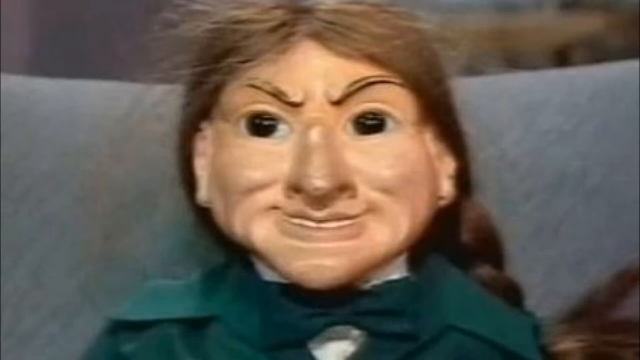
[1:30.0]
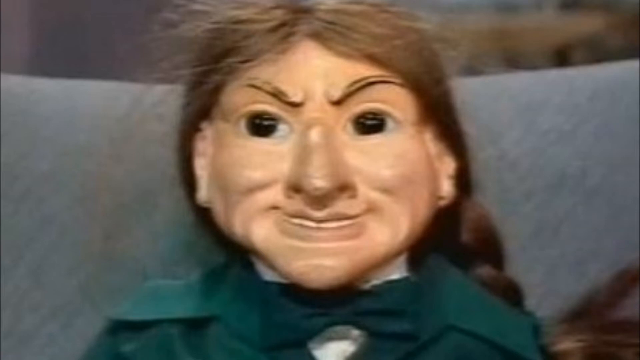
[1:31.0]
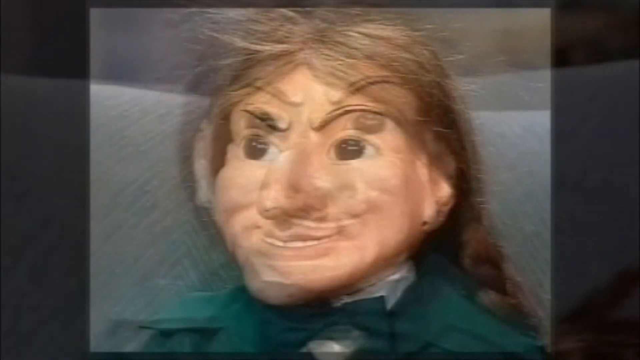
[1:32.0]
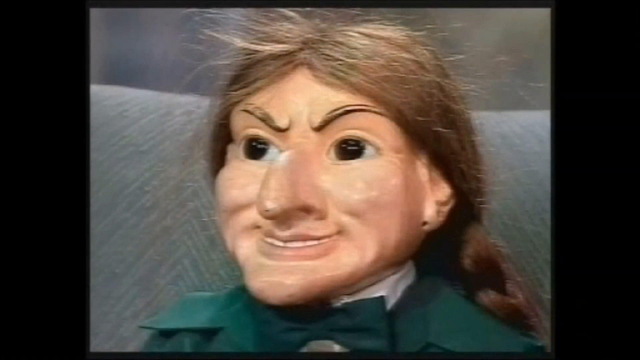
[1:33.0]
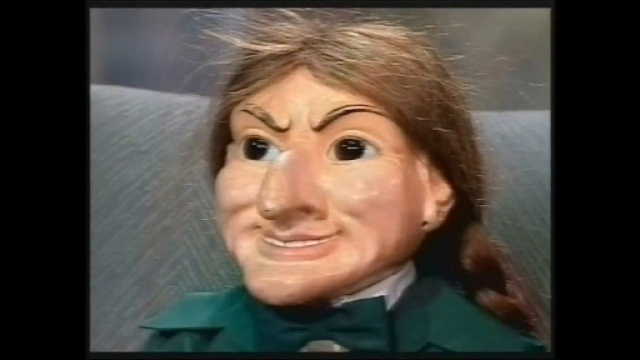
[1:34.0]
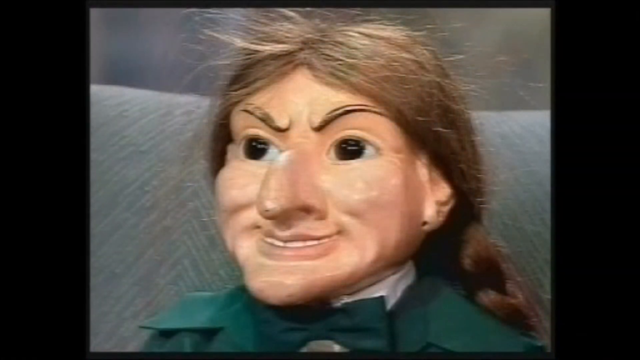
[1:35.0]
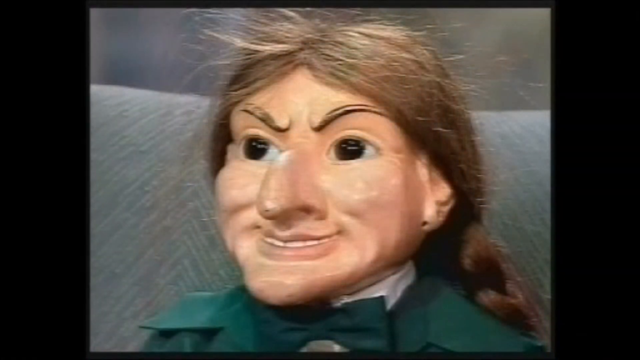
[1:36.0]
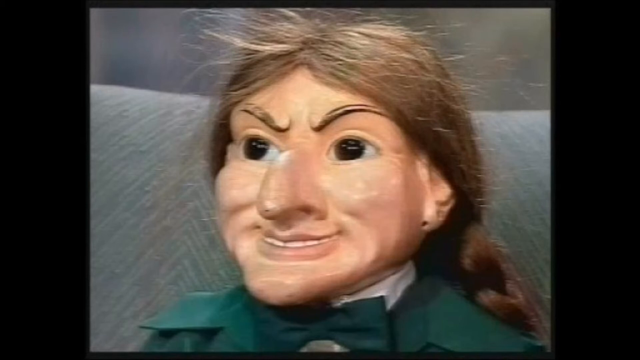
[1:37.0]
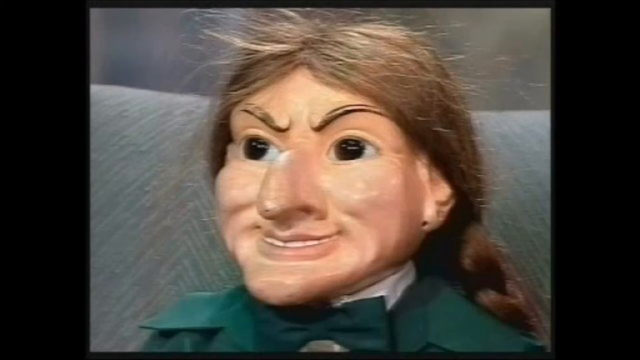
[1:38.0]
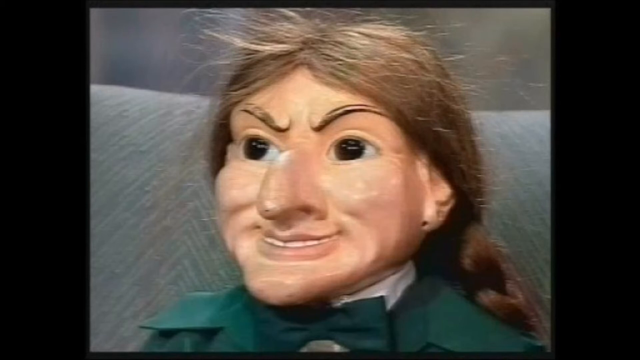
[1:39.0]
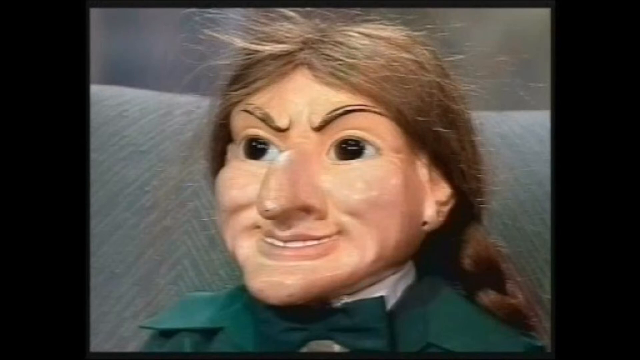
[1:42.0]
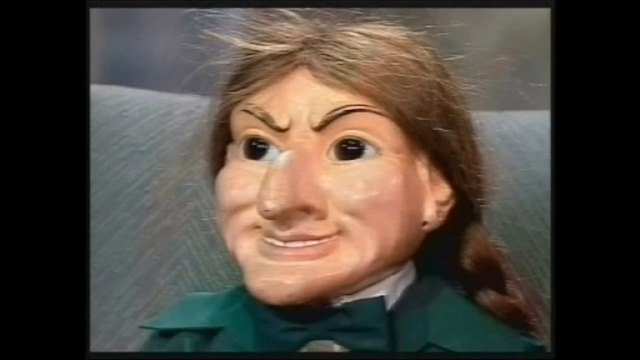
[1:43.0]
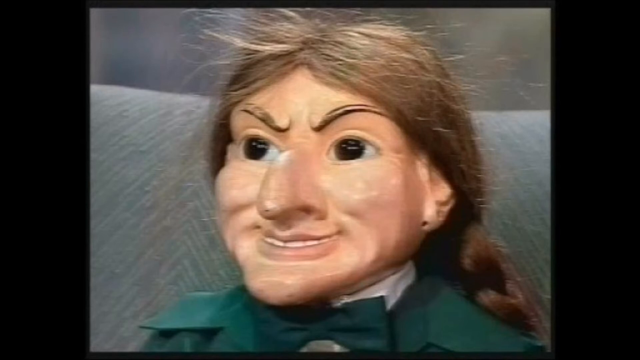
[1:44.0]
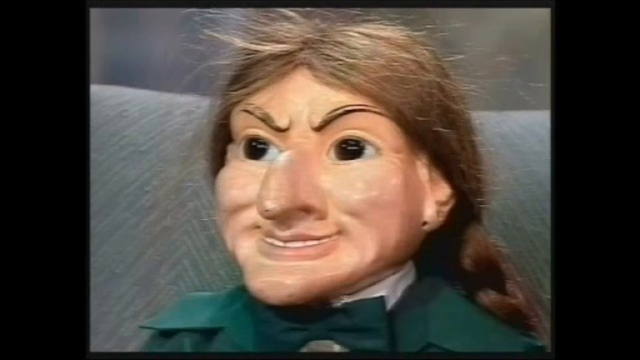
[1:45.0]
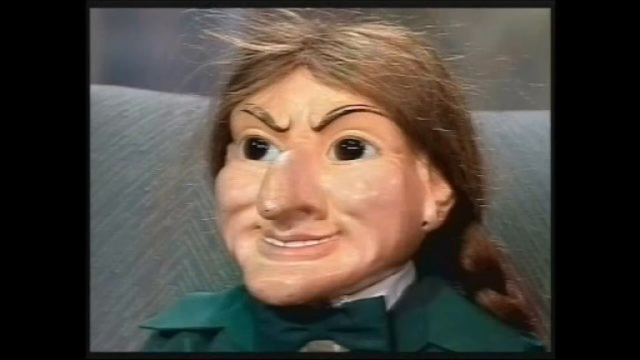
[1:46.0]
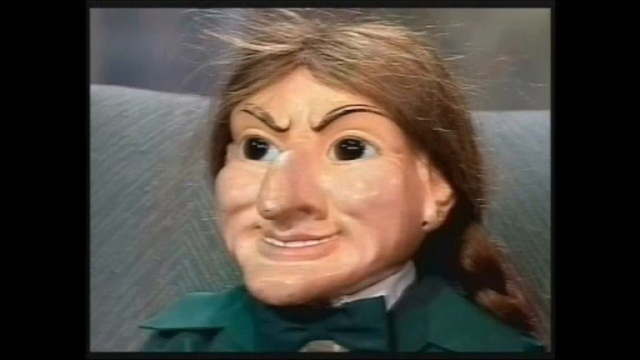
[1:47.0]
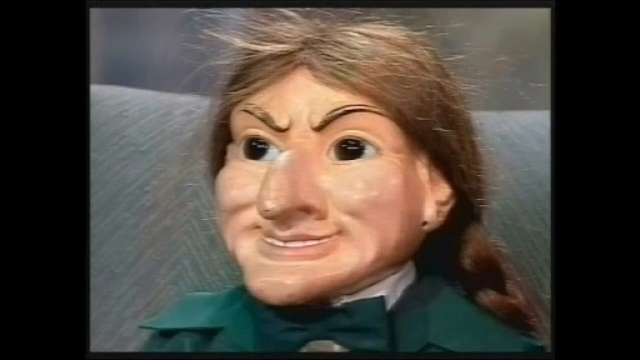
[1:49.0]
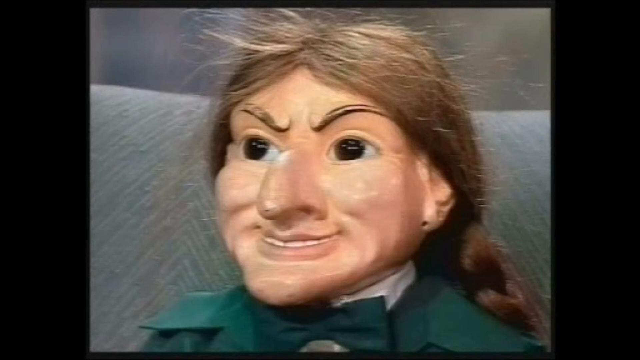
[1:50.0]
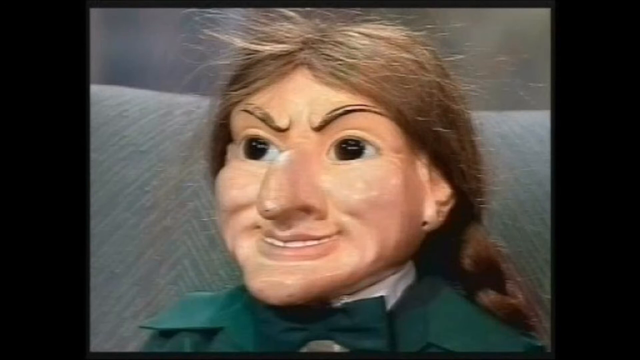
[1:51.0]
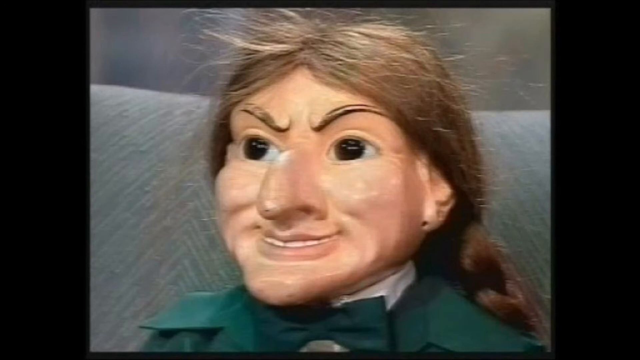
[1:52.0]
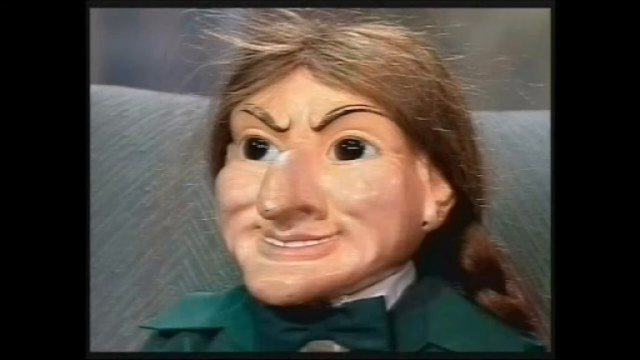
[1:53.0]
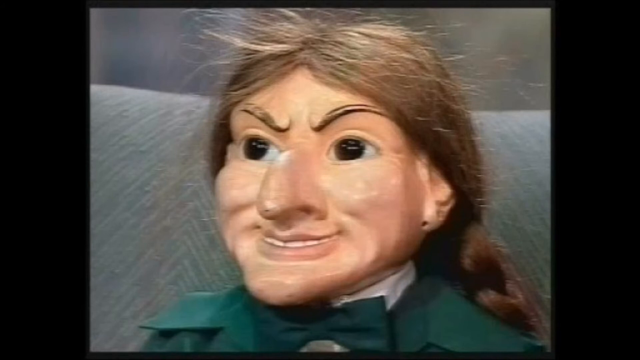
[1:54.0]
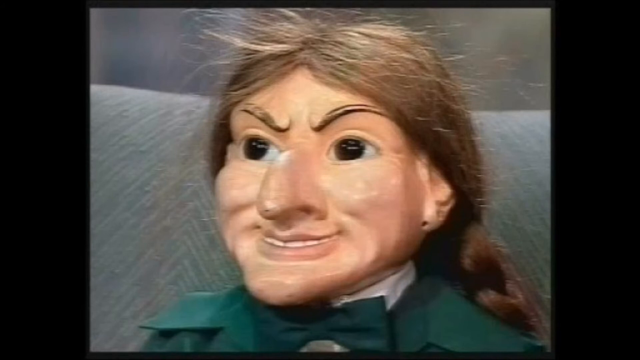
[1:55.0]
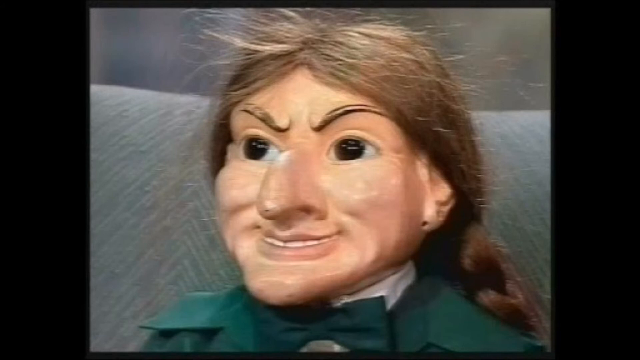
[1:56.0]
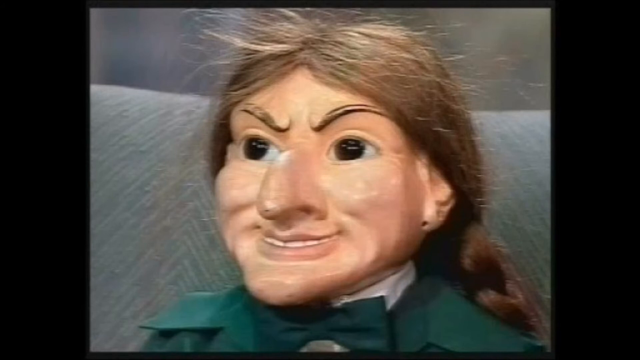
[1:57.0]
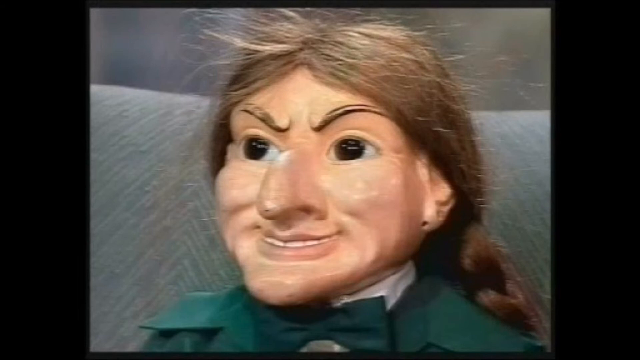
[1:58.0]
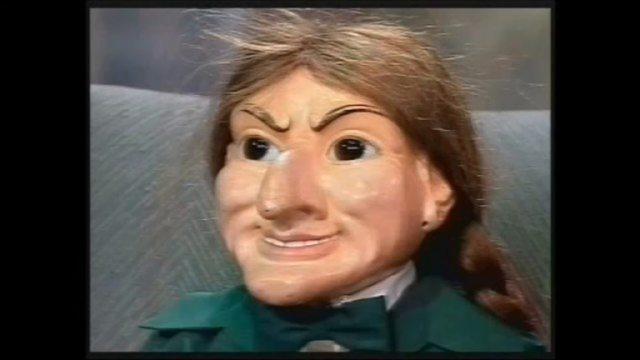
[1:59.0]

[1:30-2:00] A picture of a haunted doll shows very long eyebrows, extremely big eyes with black eyeballs, a crooked smile, a sharp nose, a very sharp chin and really long brown hair. It wears an olive green t-shirt. Next is a side profile of the doll, showing ears that are close to the head and do not stick out. The doll is on a gray background with either a gray couch or a gray pillow behind it; it is clearly a doll.